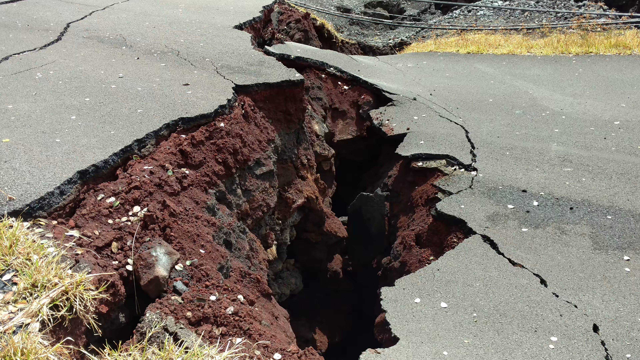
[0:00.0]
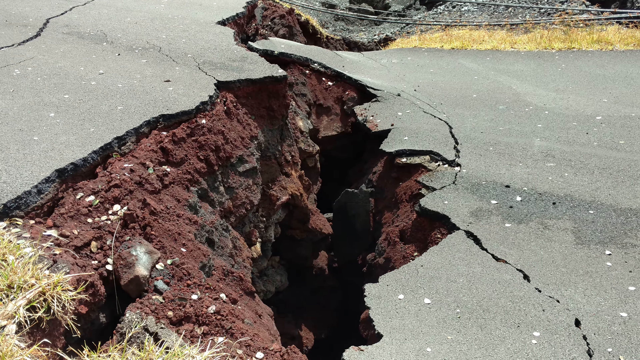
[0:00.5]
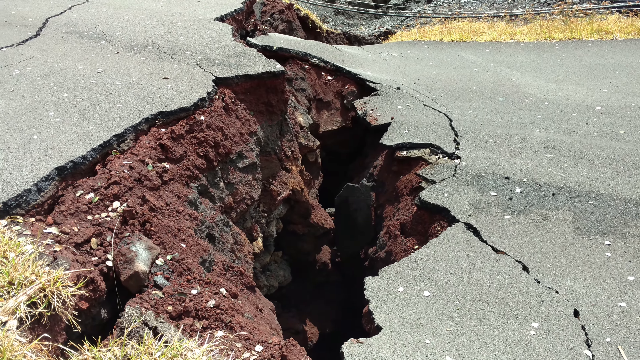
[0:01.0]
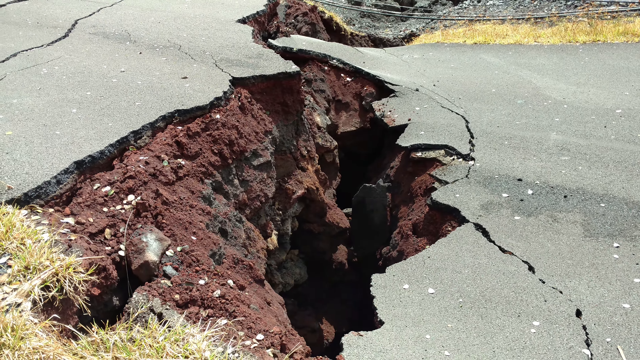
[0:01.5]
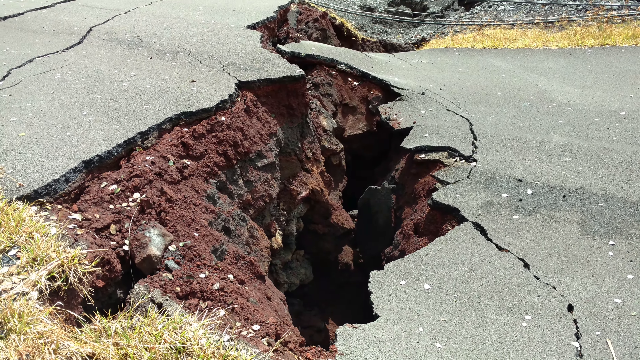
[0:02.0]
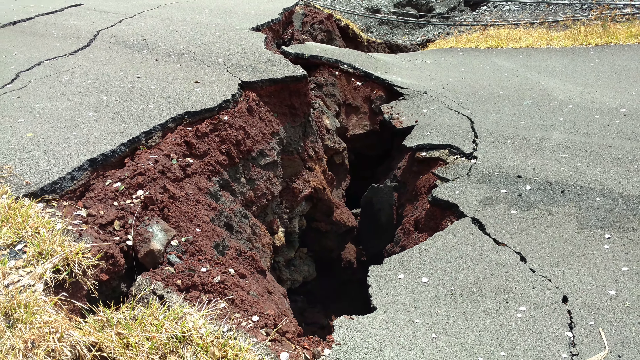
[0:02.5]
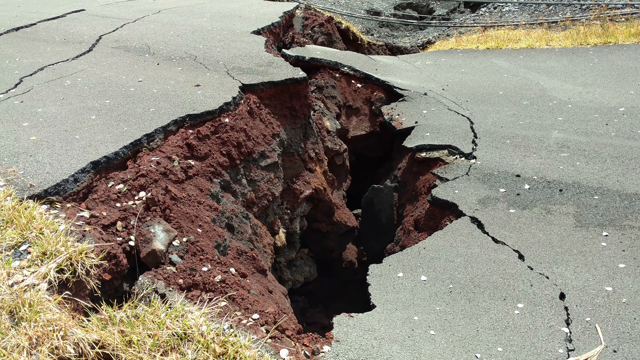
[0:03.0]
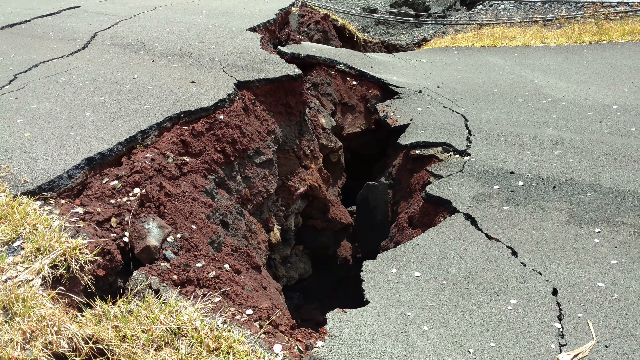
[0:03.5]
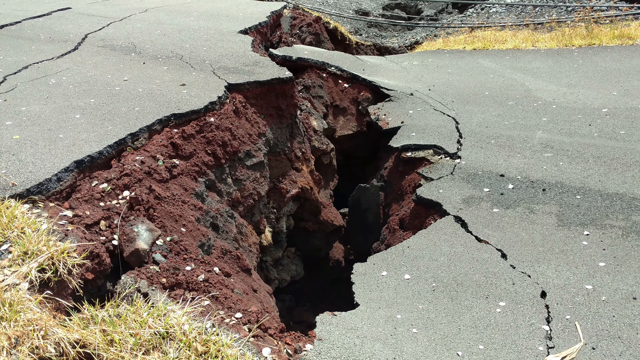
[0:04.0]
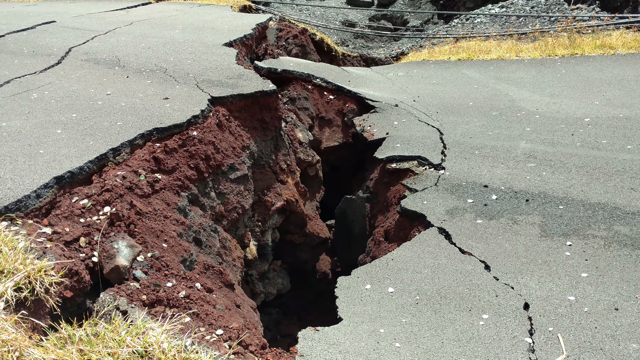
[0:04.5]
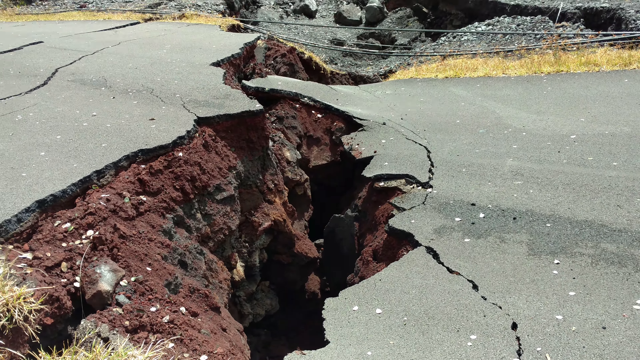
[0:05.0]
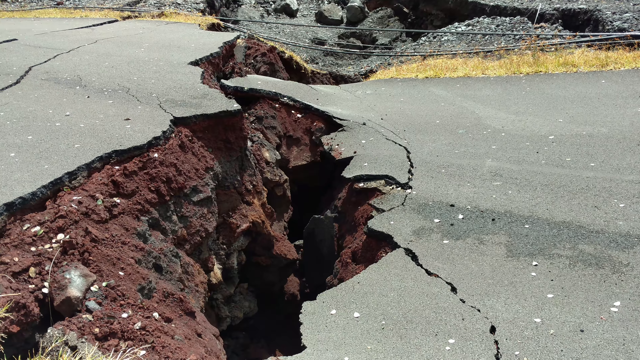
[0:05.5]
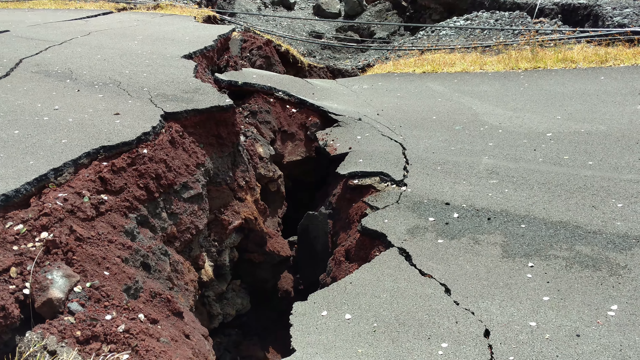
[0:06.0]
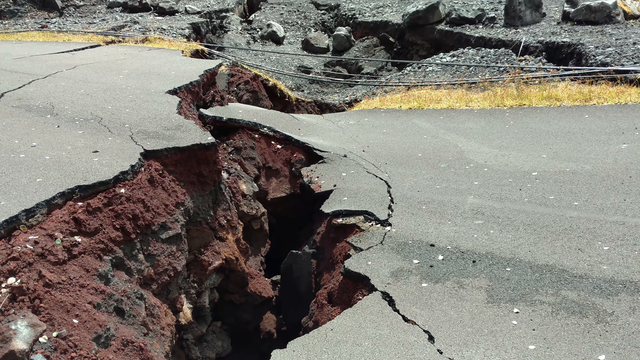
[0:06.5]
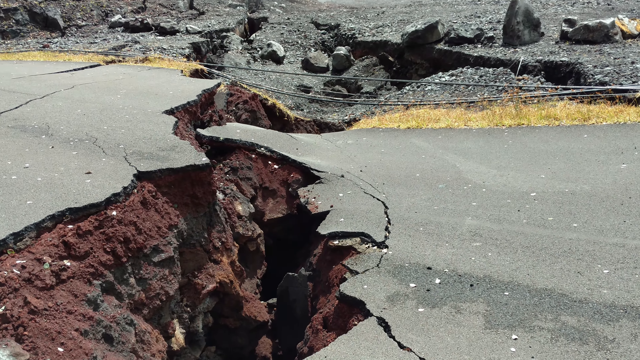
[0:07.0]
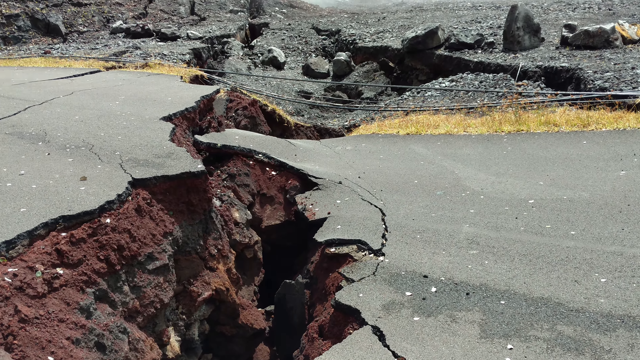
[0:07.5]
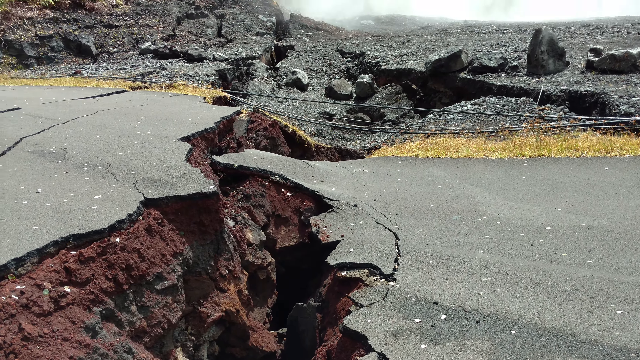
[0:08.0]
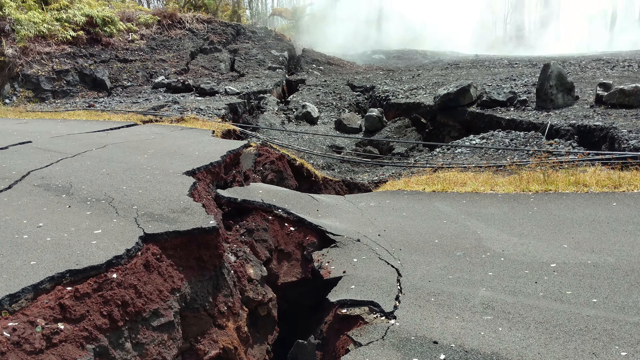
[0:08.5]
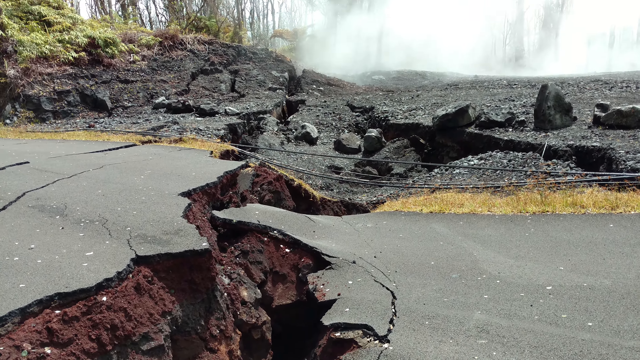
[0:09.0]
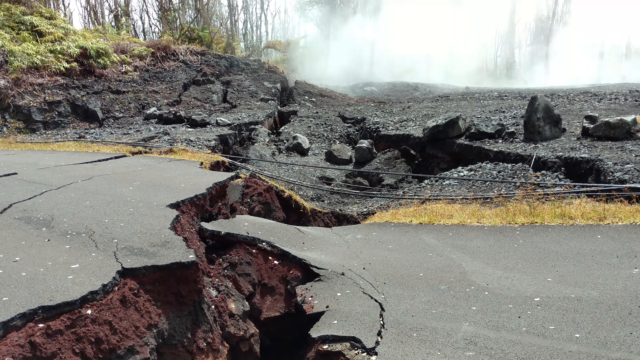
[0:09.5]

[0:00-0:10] A very large hole is in the ground. The tar is badly cracked, and it looks as if a few pieces have fallen into the ground because the hole is so big. The hole looks very deep, seemingly deep enough that a person could jump into the crack. The camera then moves its focus up, revealing a whole area that looks like it has been through a fire. Smoke is still coming from certain areas, and the area looks very dry.